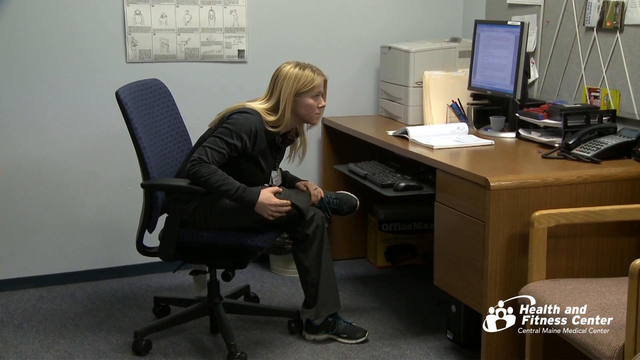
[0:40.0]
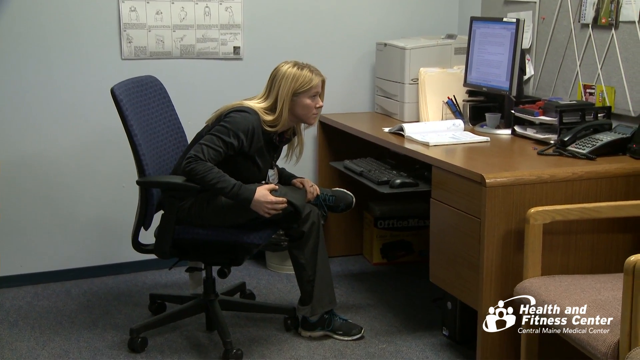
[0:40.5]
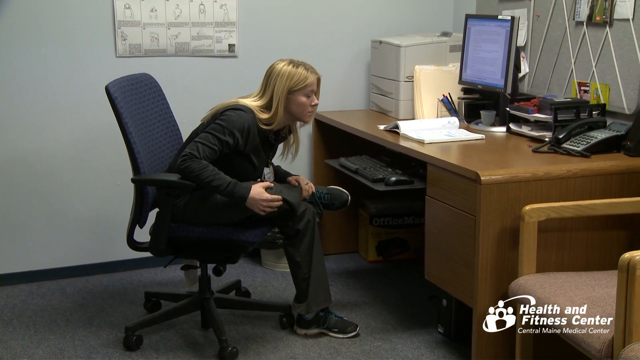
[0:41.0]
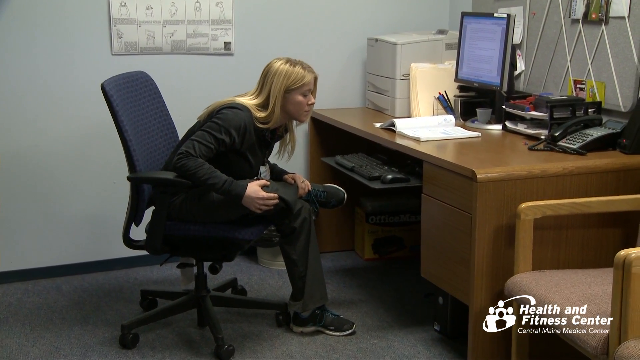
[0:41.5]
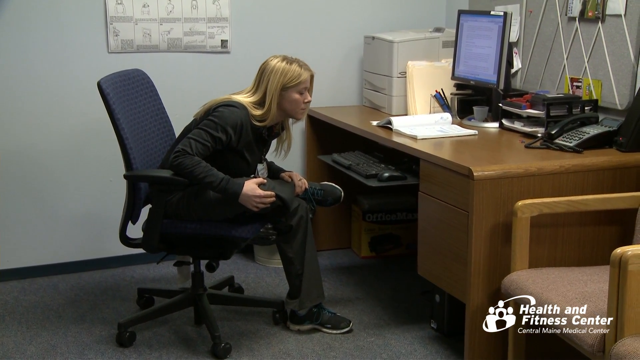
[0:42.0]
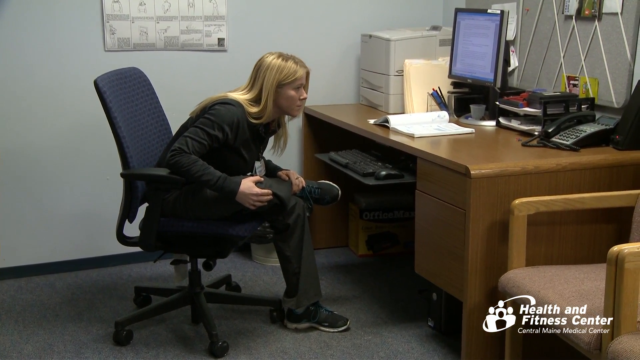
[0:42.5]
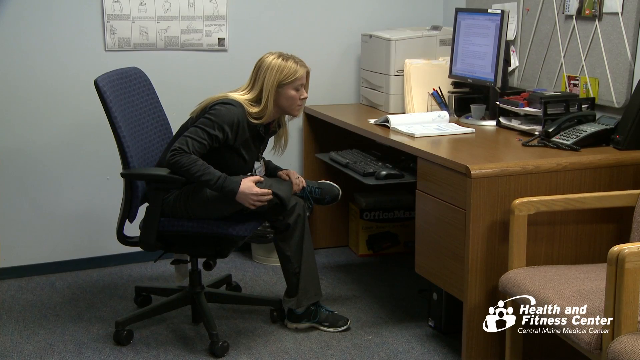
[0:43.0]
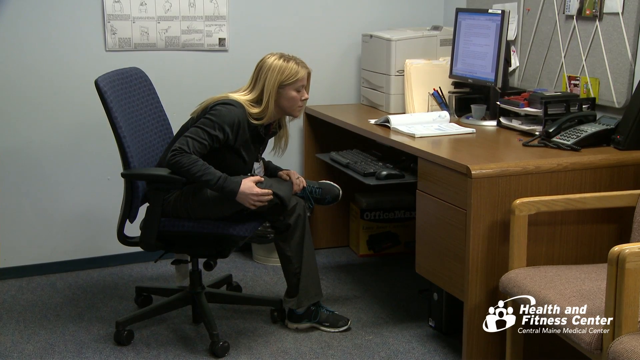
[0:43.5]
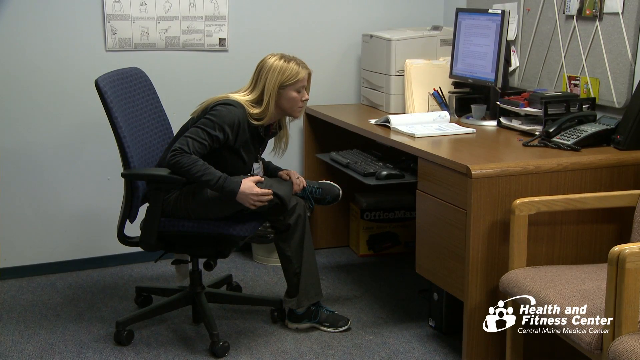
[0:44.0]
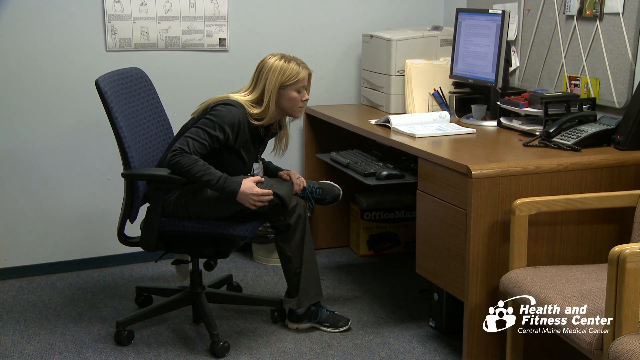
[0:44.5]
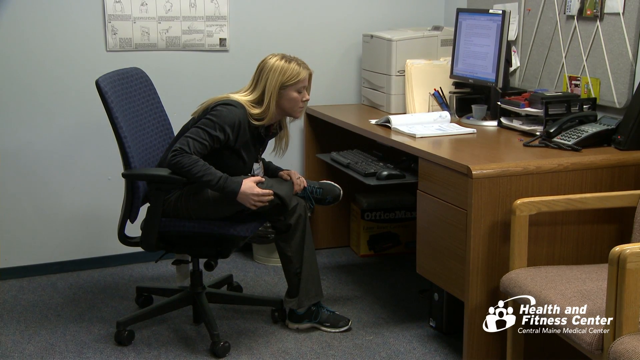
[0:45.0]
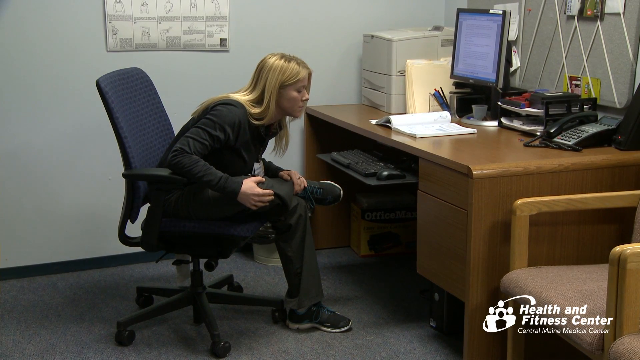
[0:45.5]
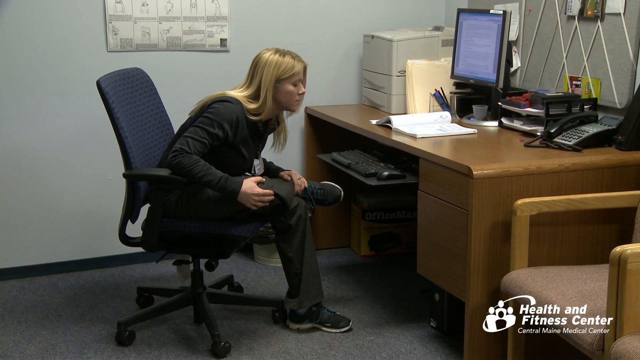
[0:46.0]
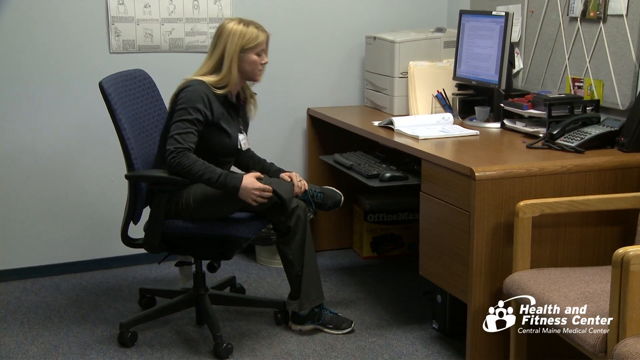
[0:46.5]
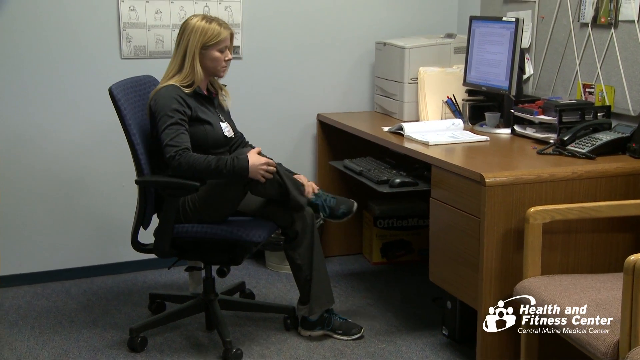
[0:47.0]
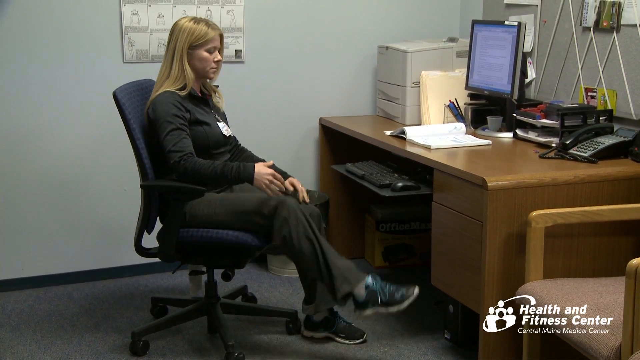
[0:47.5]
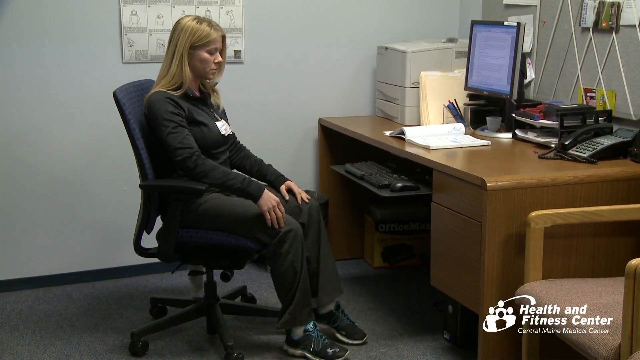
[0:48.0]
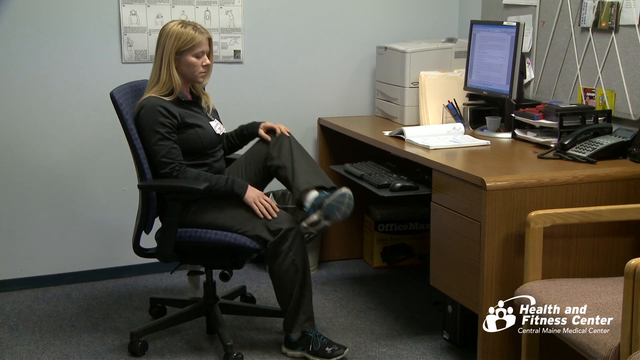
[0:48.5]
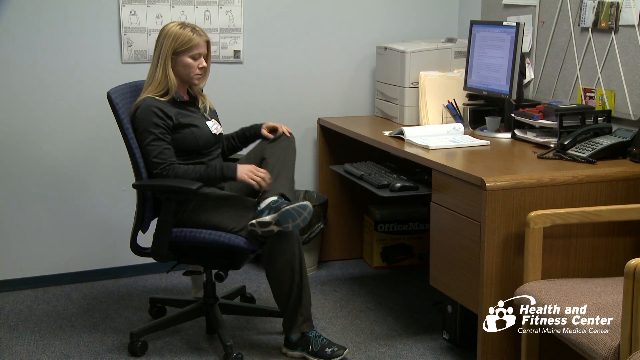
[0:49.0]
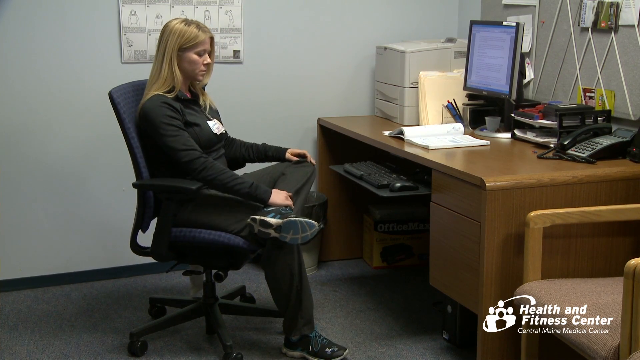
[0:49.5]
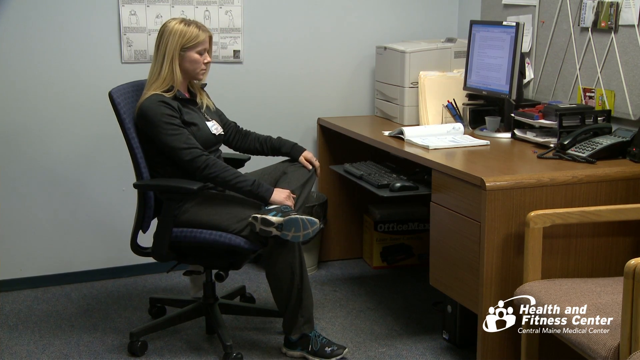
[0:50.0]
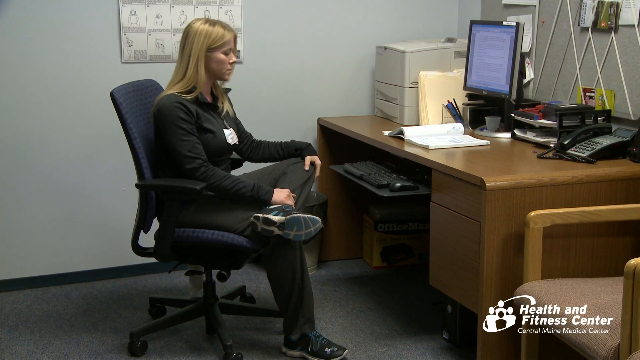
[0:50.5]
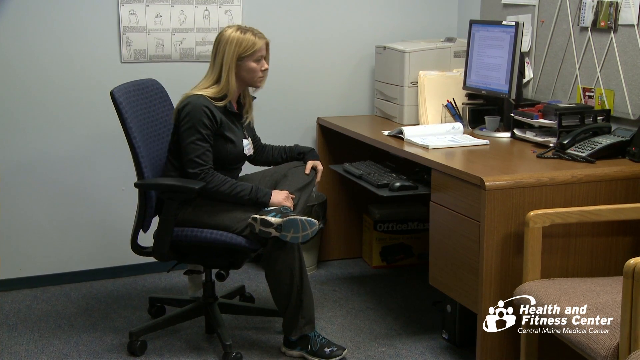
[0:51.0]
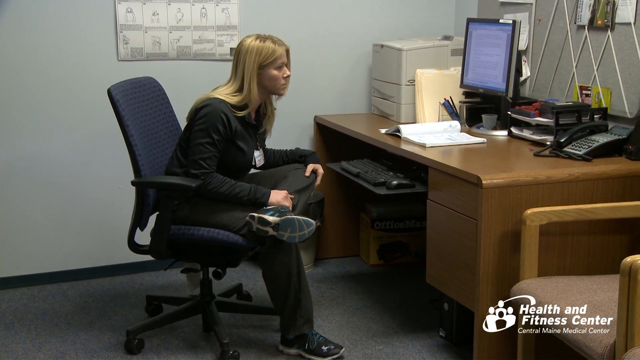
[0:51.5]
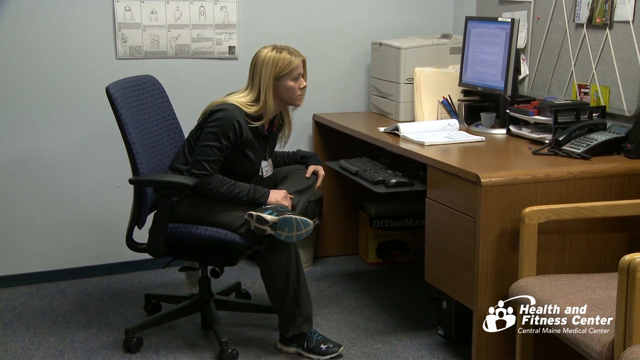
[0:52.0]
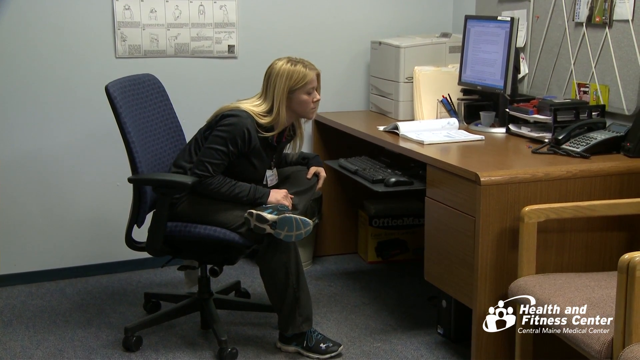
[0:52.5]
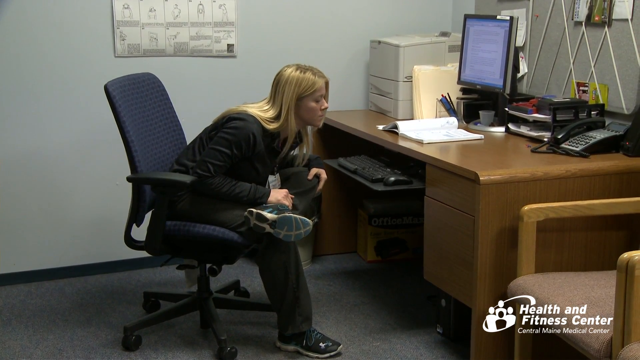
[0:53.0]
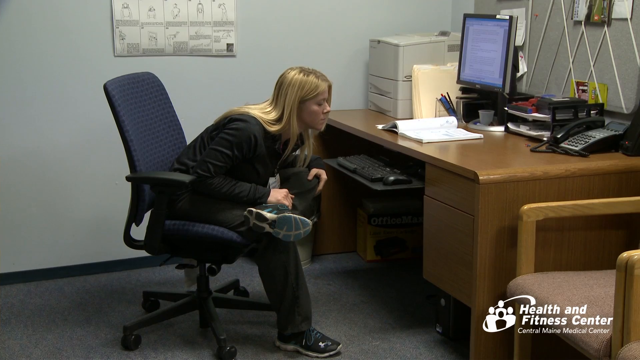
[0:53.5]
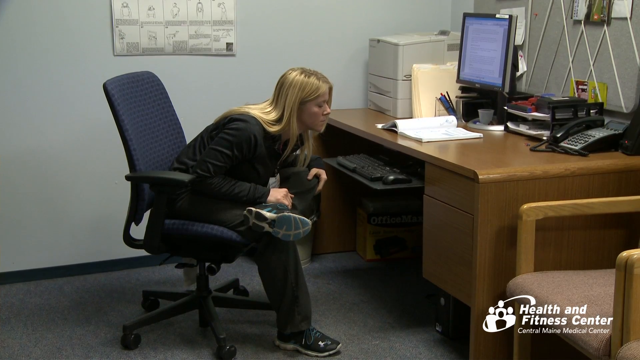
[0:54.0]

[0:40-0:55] The young blonde woman is seen from the side, sitting in an office swivel chair with a blue fabric seat and back and black plastic arms. She leans forwards with her legs crossed, her right leg over the left so that her right ankle rests on her left knee. Her left hand grips her right ankle and her right hand is placed on her right knee. She holds this posture for a few seconds, then leans backwards until she is sitting straight again. She uncrosses her right leg, places her right foot on the ground, lifts her left leg and crosses it over her right, placing her left ankle on her right knee. Her left hand holds her left knee and her right hand holds her left ankle. She bends forwards again and holds the posture for a while.